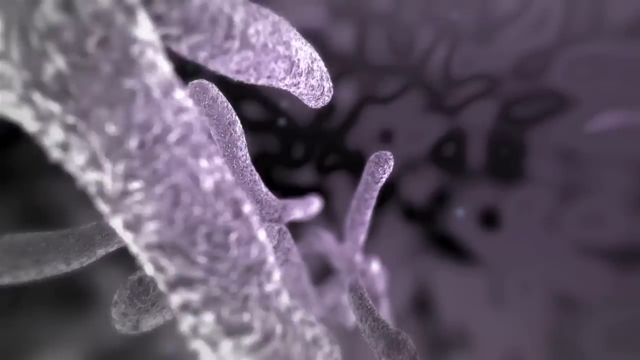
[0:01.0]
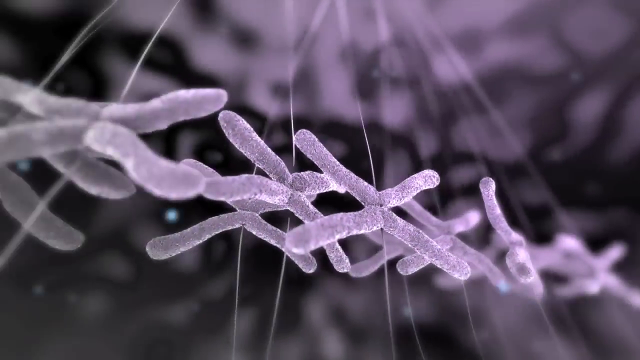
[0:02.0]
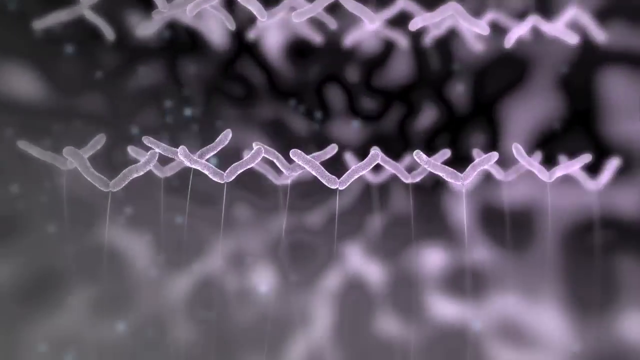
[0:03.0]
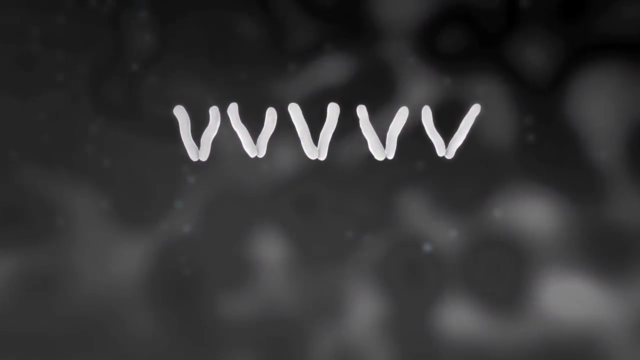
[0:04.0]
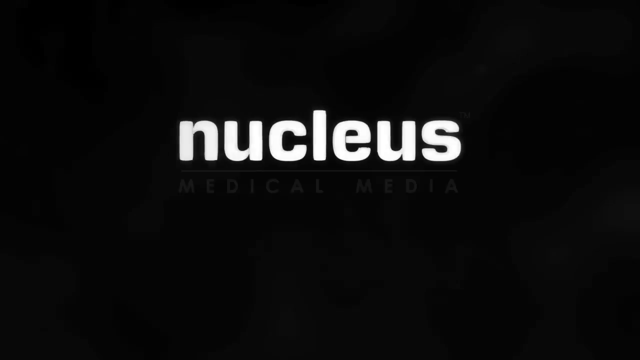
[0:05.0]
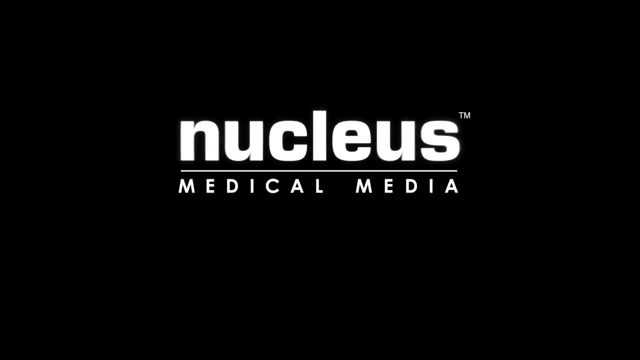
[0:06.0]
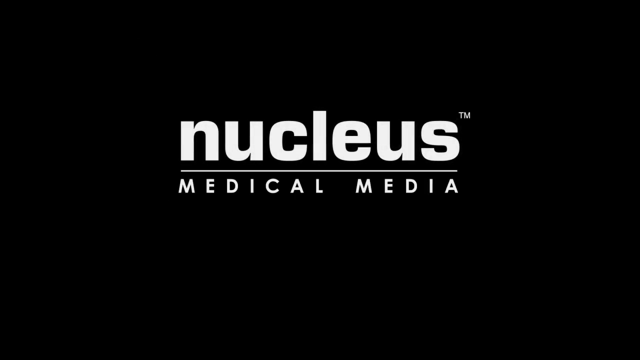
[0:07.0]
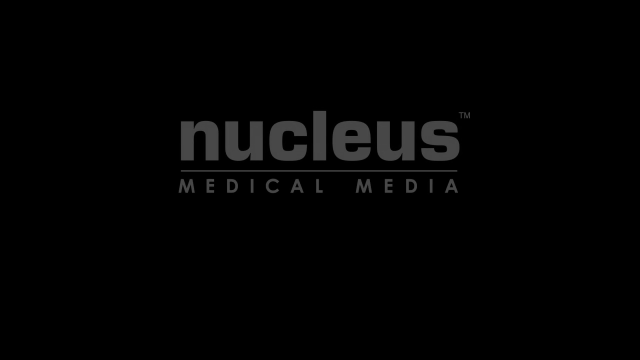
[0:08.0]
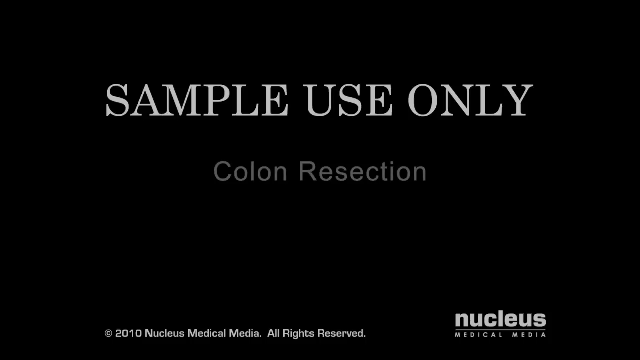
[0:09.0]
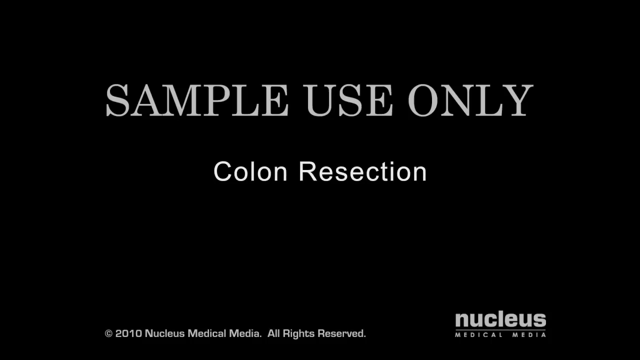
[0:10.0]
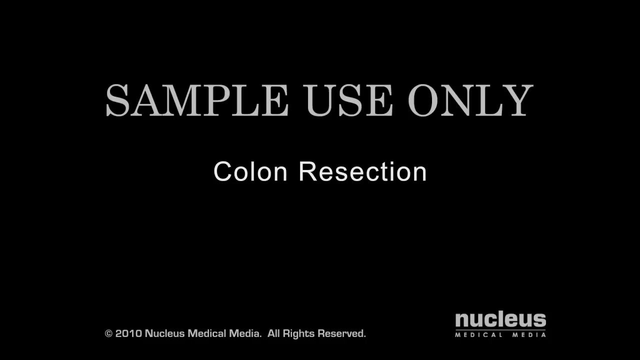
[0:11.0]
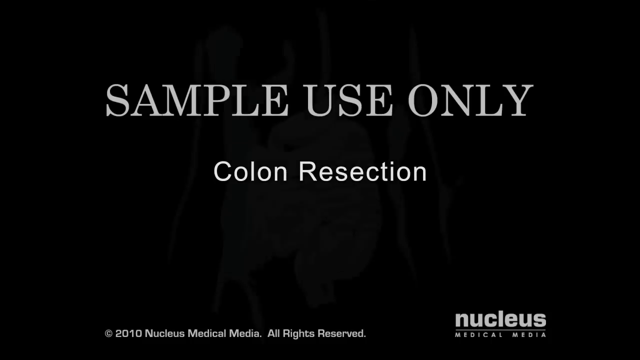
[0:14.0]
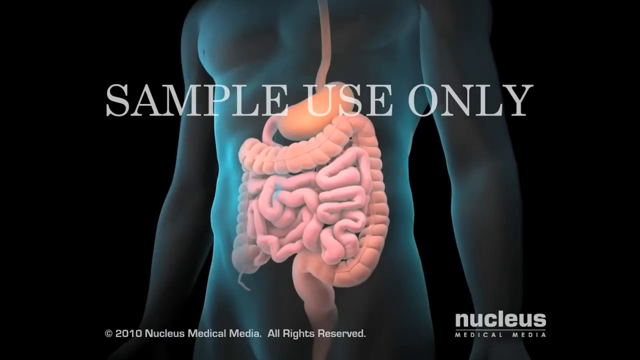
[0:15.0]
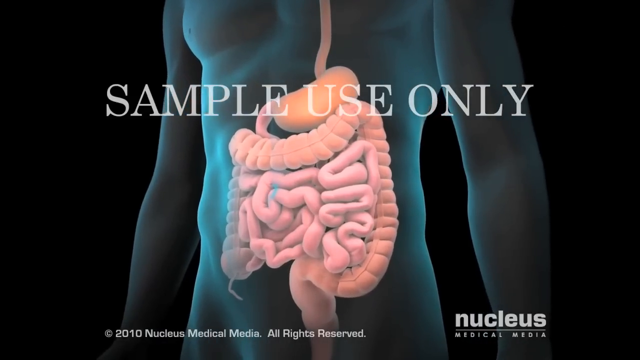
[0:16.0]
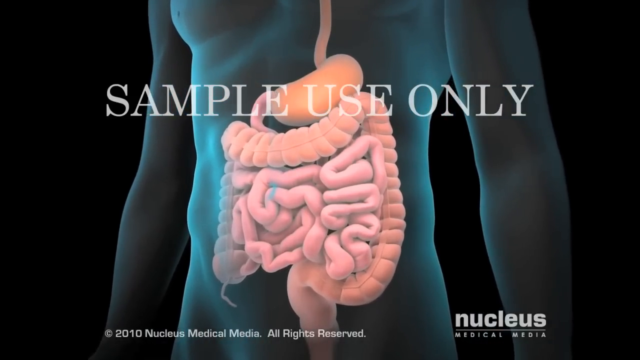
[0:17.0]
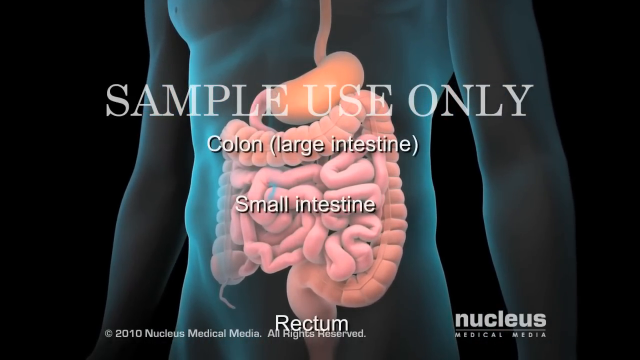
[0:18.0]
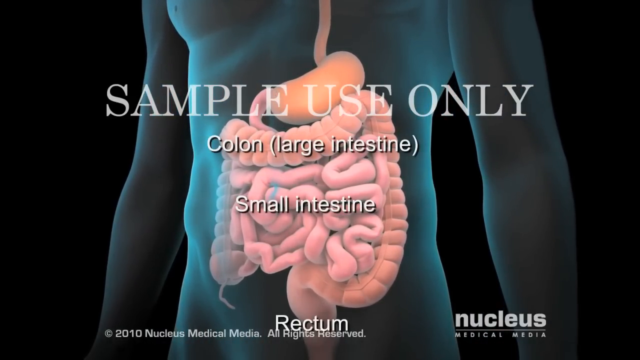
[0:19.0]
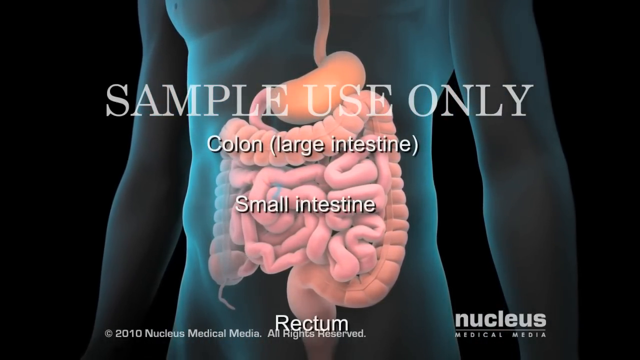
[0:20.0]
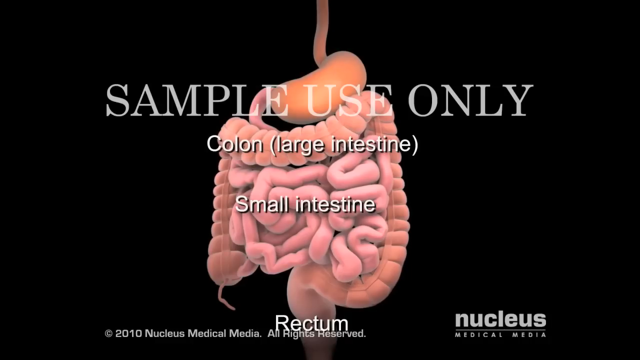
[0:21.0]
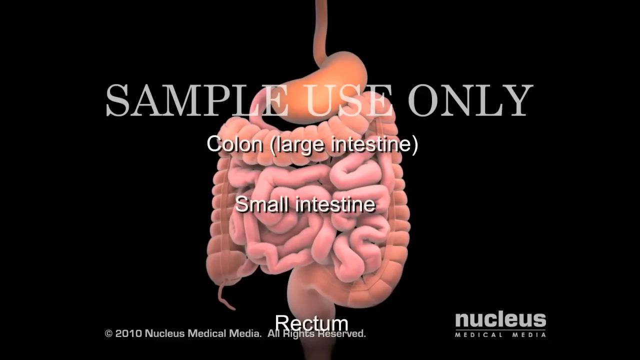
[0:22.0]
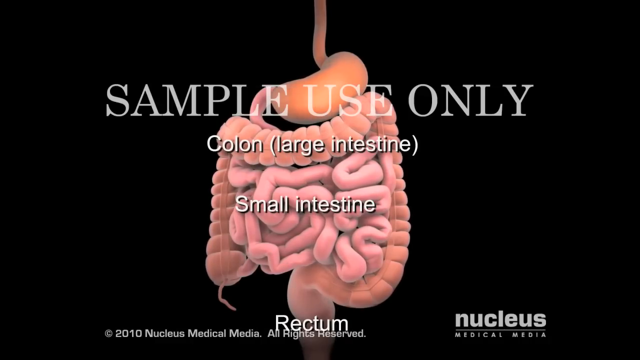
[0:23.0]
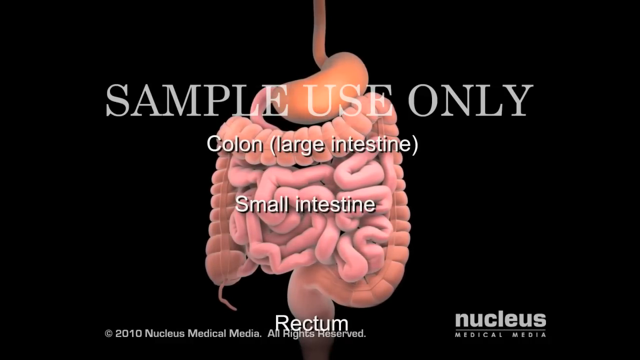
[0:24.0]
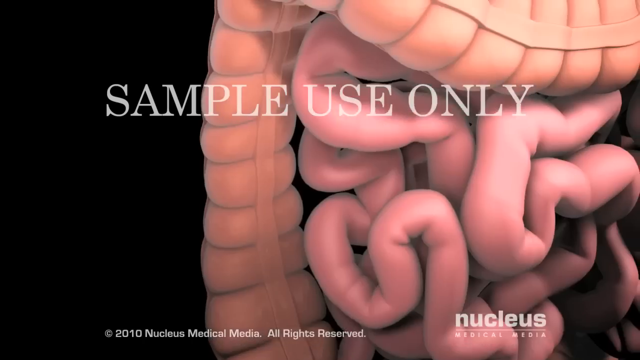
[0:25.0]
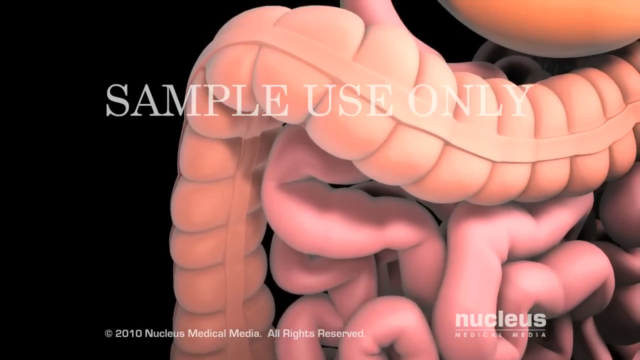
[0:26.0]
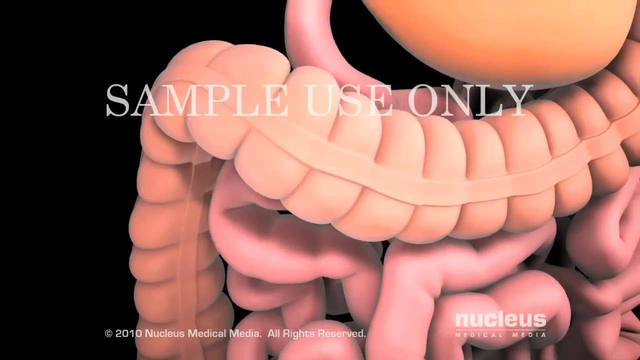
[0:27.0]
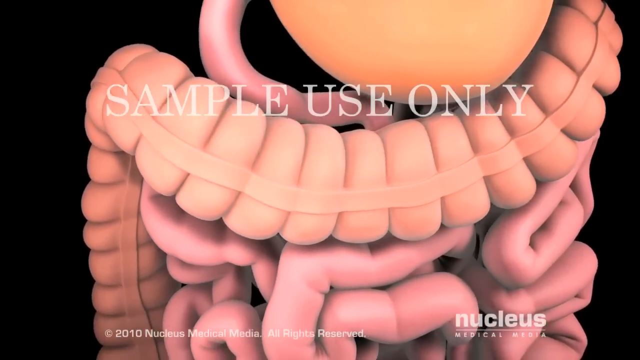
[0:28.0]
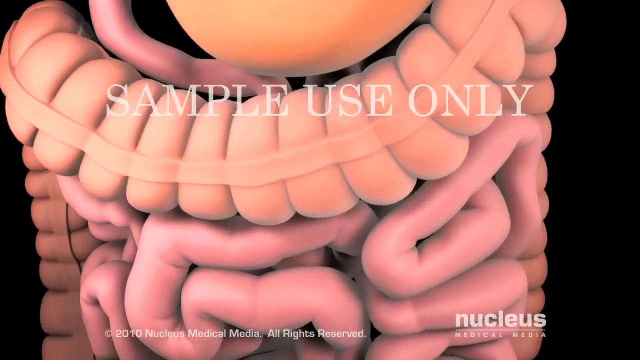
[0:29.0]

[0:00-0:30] Purple cells or chromosomes form the word "nucleus," and text on the screen reads "medical media," "sample use only," and "colon resection." A model of a colon and digestive system appears, showing the whole digestive system and its organs, with labels for the large intestine, which is the colon, and the small intestine. The words "sample use only" stay on the screen while the digestive system is viewed very close up. The model is not a human colon but a body, like a mannequin, shaded in blue colors. The small intestine is a pinkish color outlined in a peach color. The model body turns a bit so the entire digestive system and its parts can be seen.